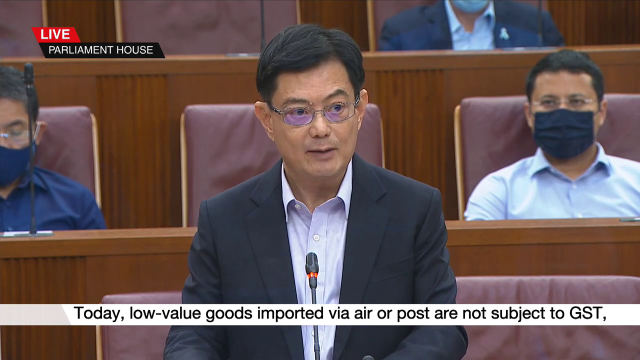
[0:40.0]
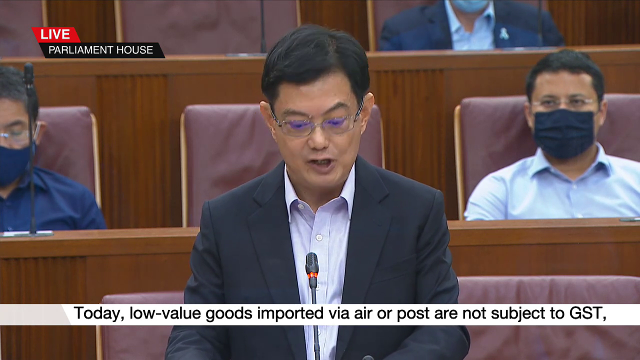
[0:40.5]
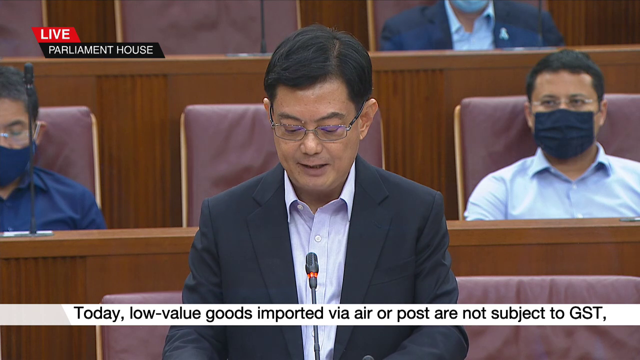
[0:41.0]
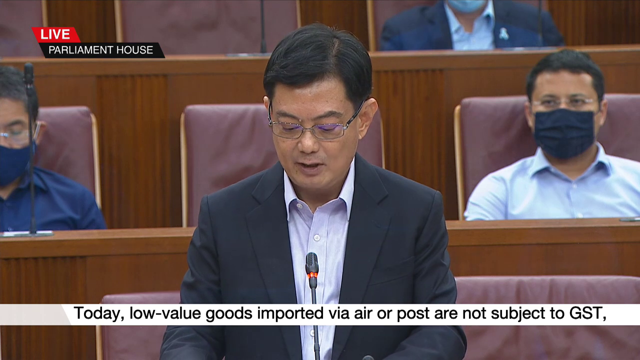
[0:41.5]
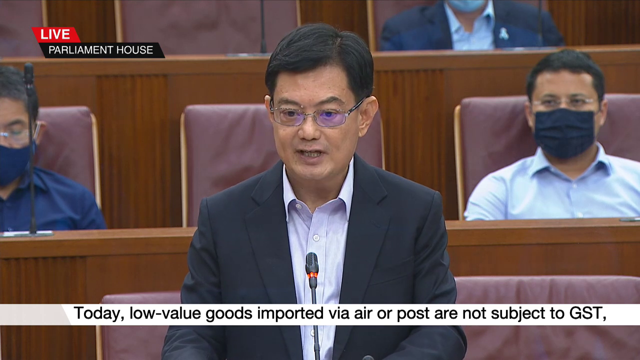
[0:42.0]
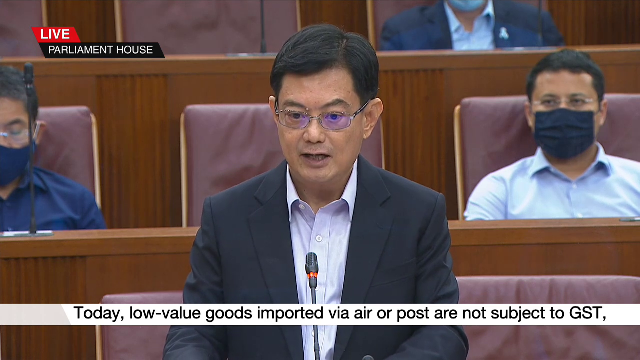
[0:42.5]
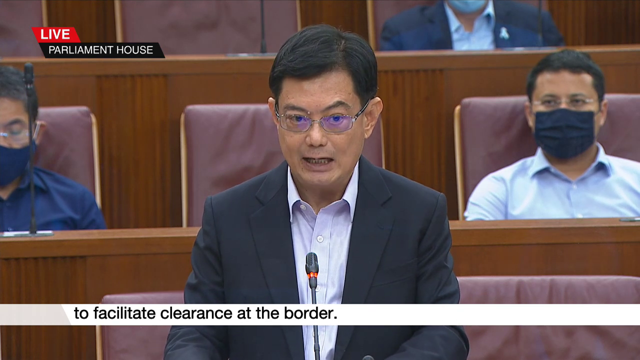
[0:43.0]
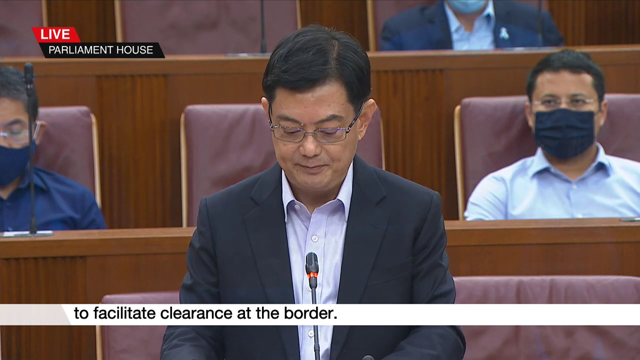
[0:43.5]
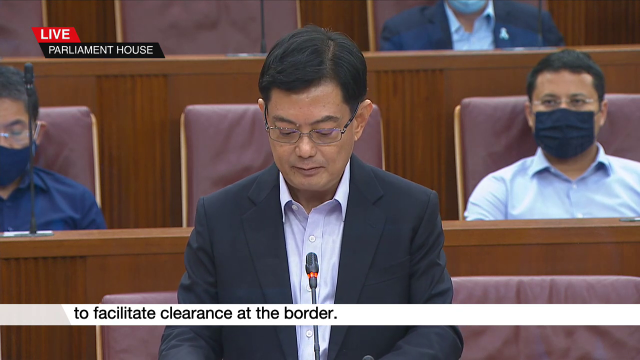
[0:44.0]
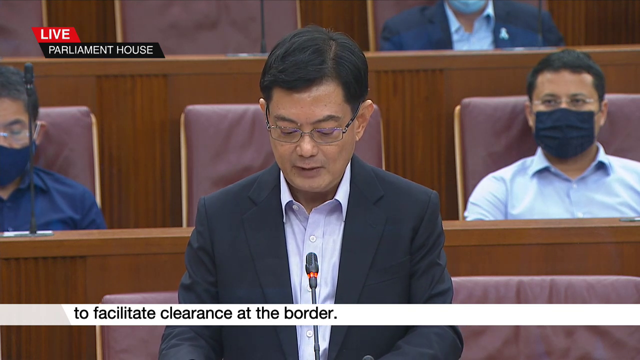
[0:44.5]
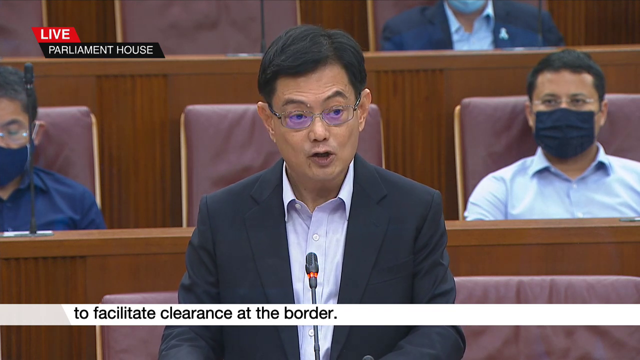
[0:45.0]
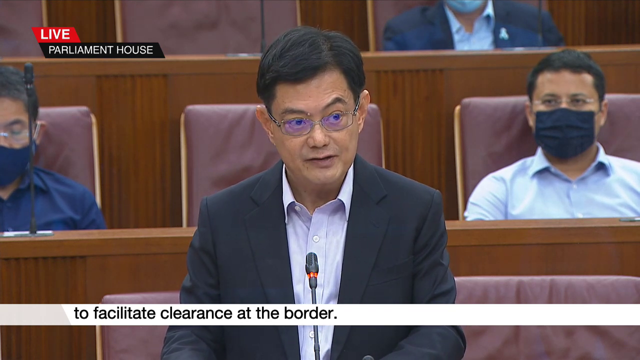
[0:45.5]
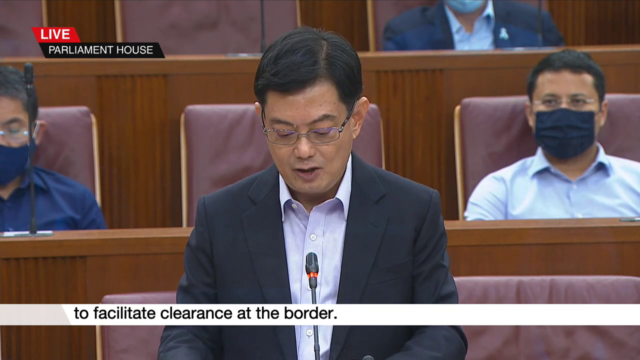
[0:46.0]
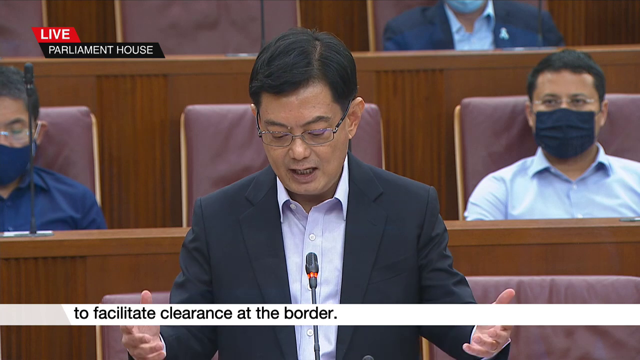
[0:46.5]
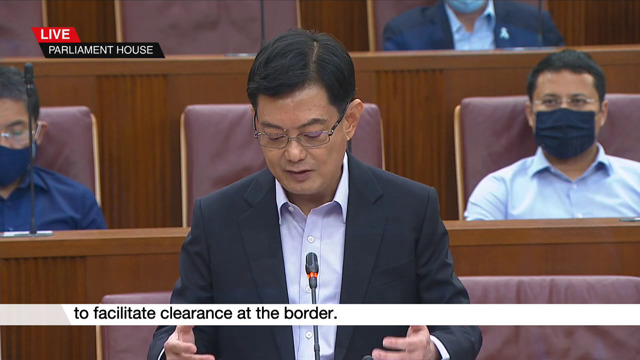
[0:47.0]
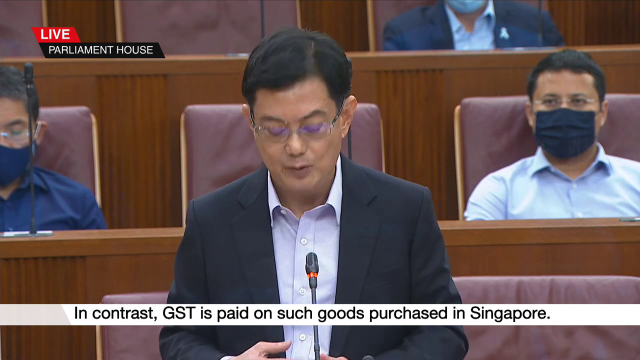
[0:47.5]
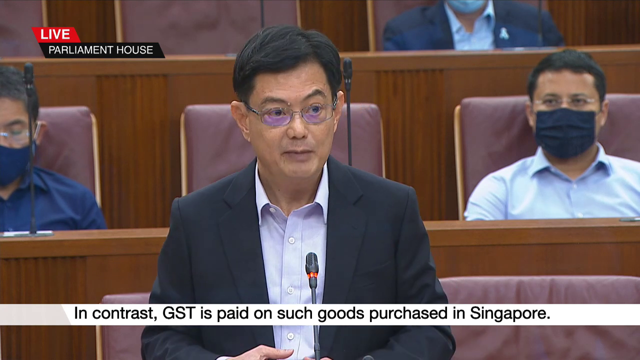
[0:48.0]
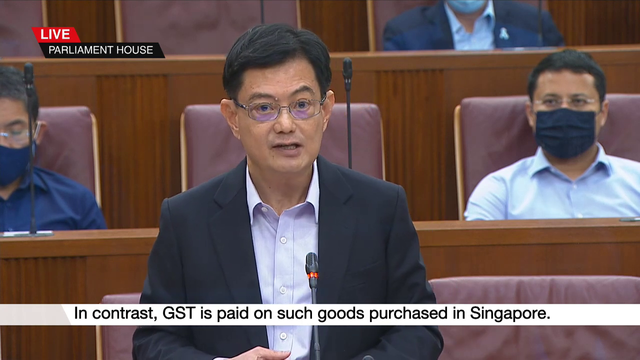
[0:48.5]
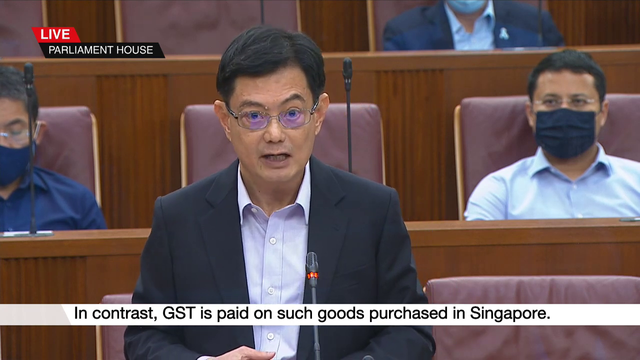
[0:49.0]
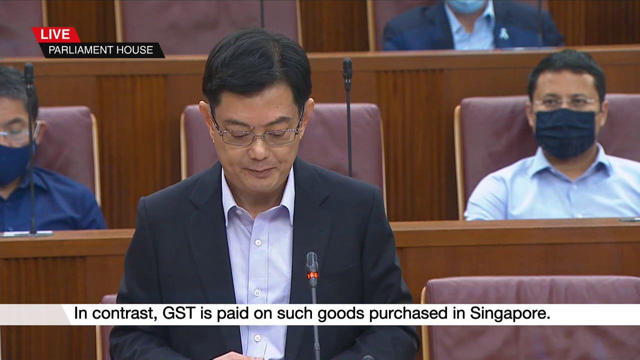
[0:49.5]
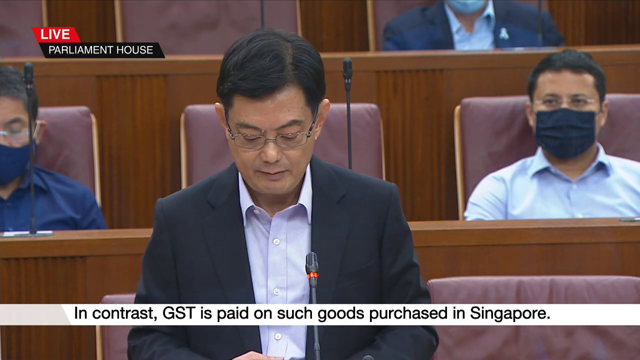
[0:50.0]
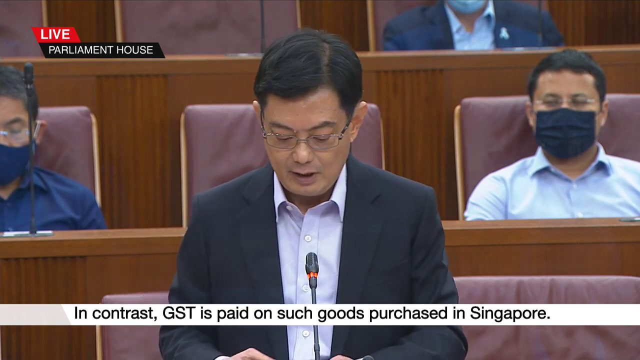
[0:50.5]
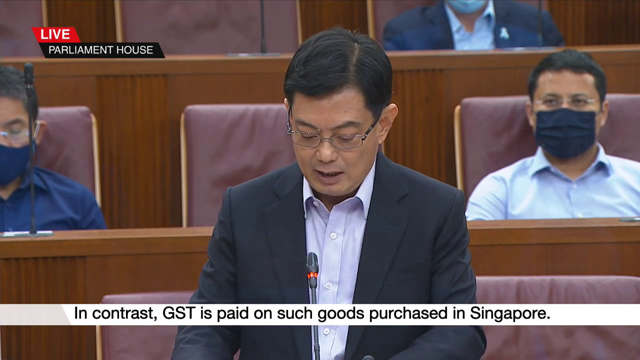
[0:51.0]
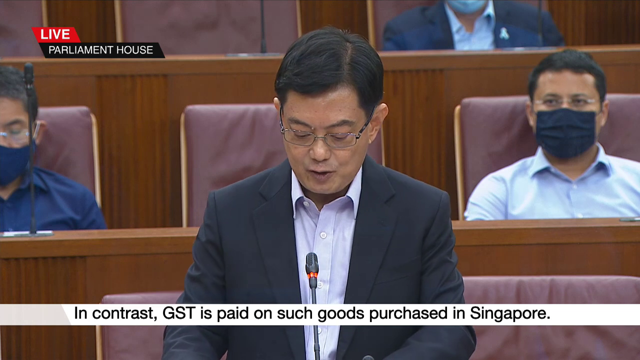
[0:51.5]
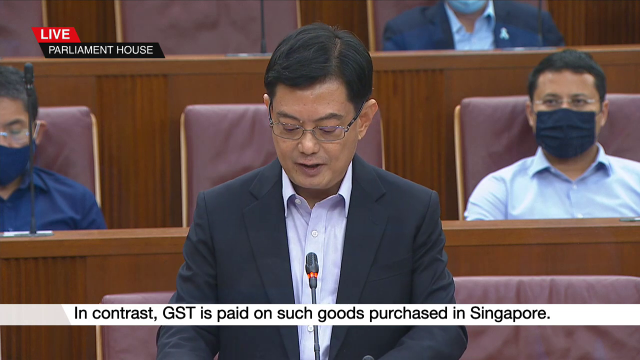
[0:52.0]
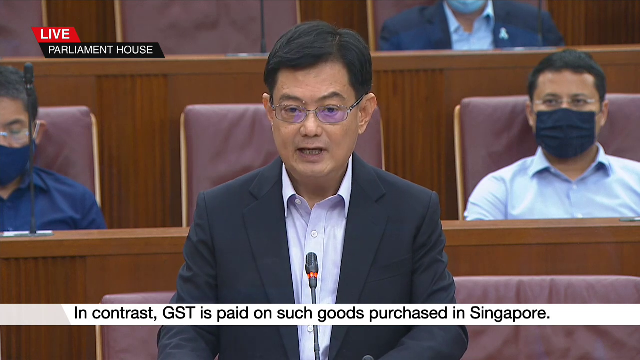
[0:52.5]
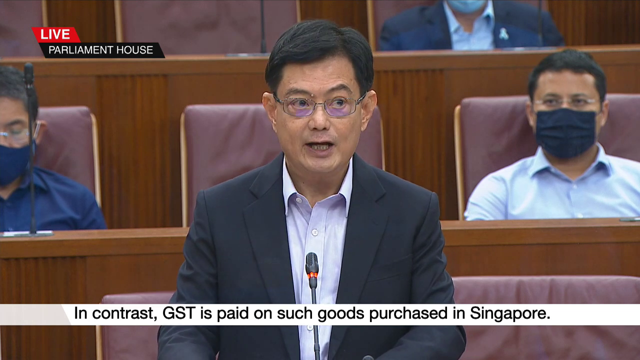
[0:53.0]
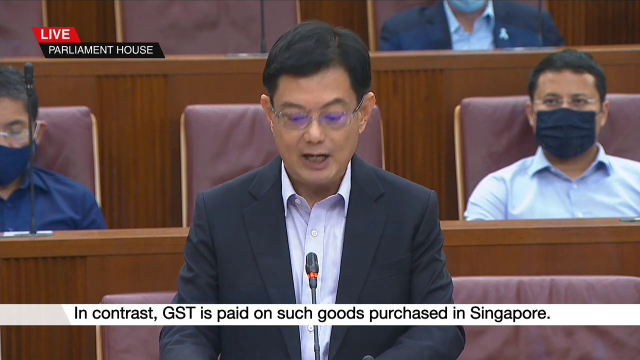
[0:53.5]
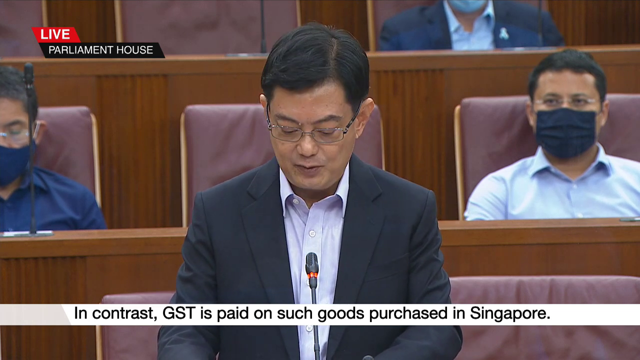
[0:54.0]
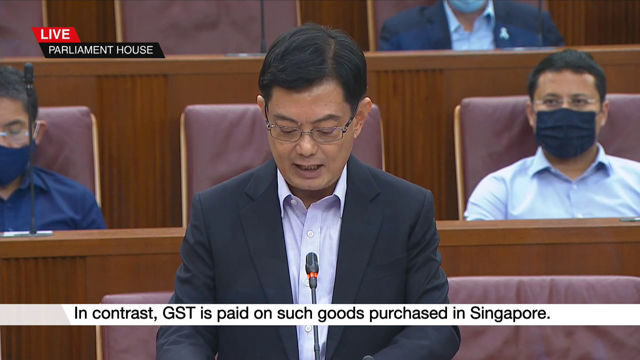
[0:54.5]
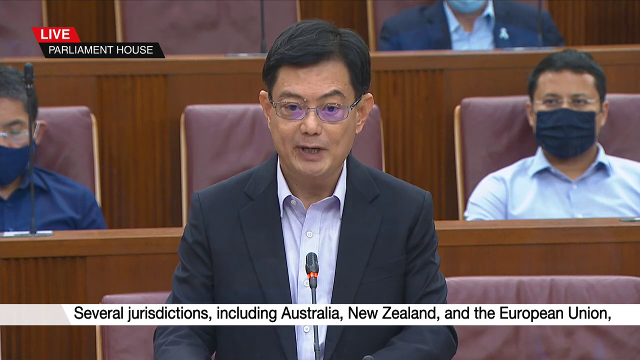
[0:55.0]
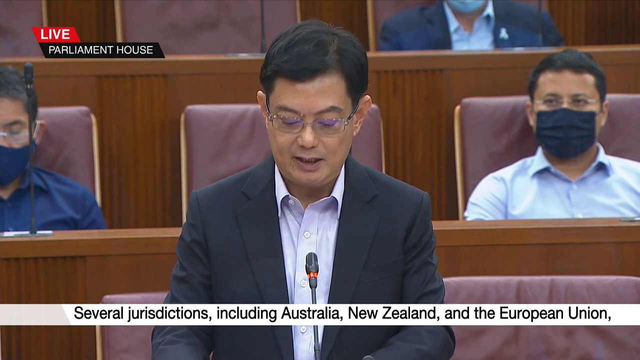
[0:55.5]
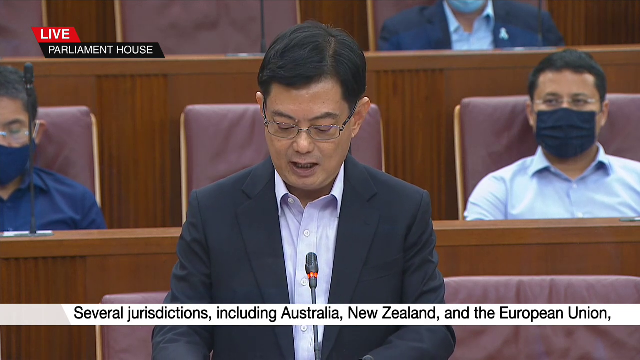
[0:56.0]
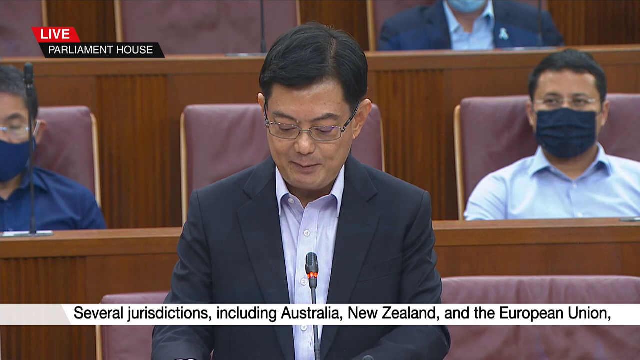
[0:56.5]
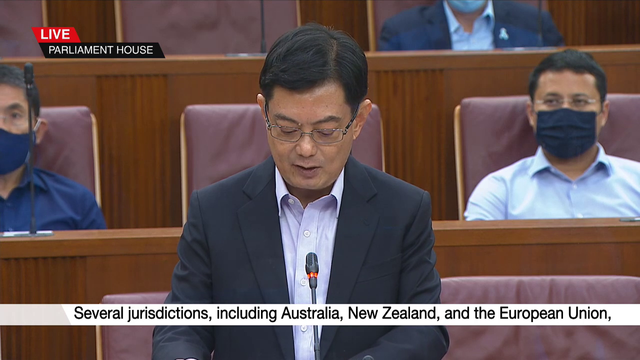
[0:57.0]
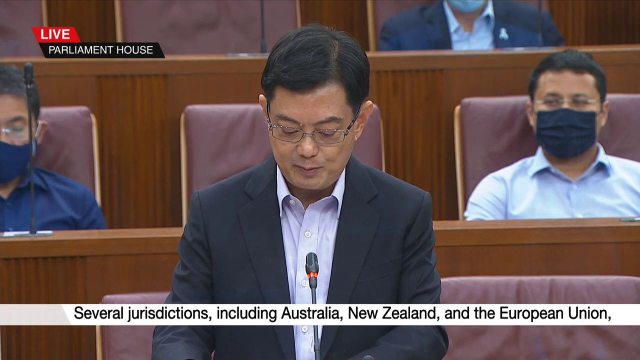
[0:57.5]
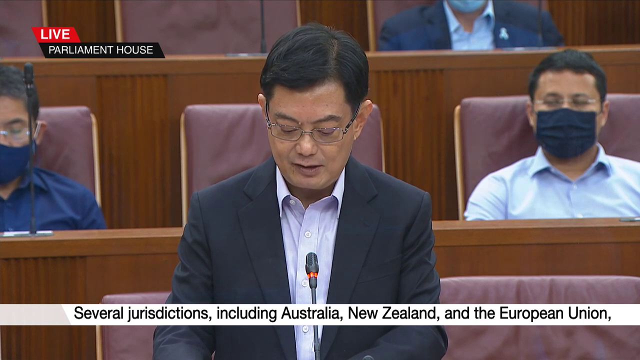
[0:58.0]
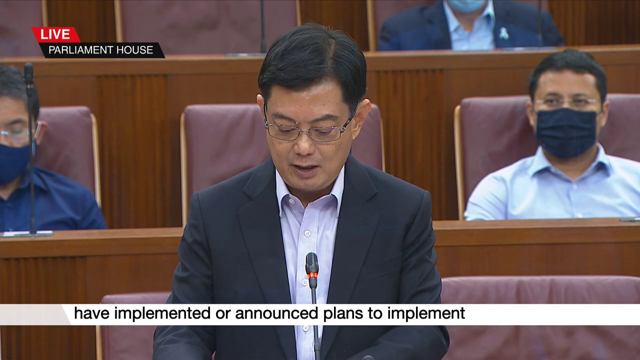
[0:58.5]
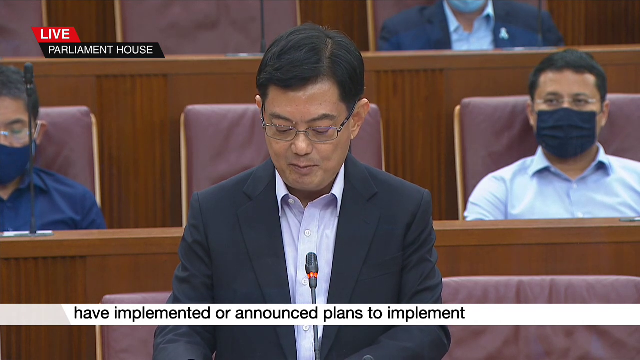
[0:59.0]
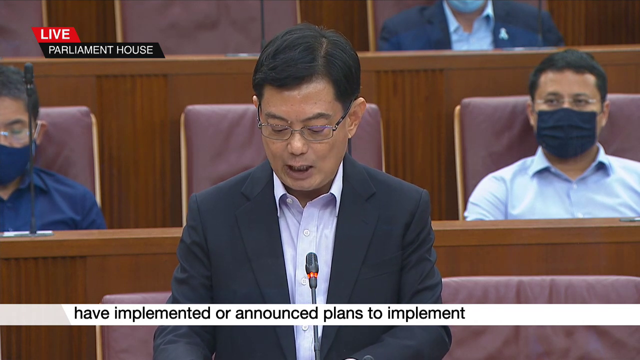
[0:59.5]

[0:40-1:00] The man continues to speak, with the transcription visible at the bottom of the screen. He says, "to facilitate clearance at the border," and goes on: "In contrast, GST is paid on such goods purchased in Singapore. Several jurisdictions including Australia, New Zealand, and the European Union have implemented or announced plans to implement."